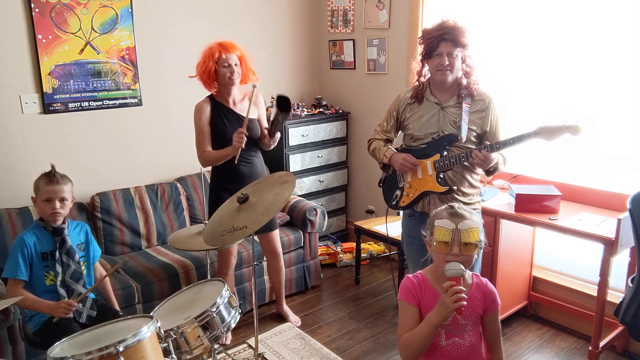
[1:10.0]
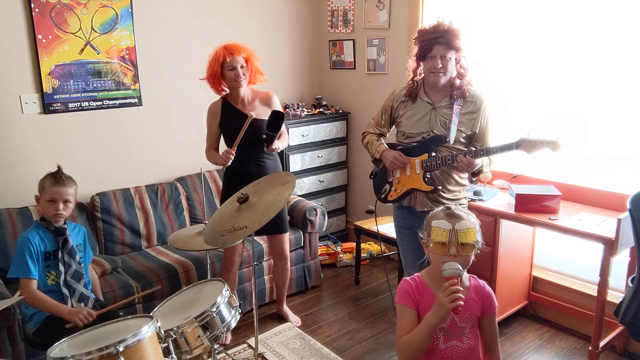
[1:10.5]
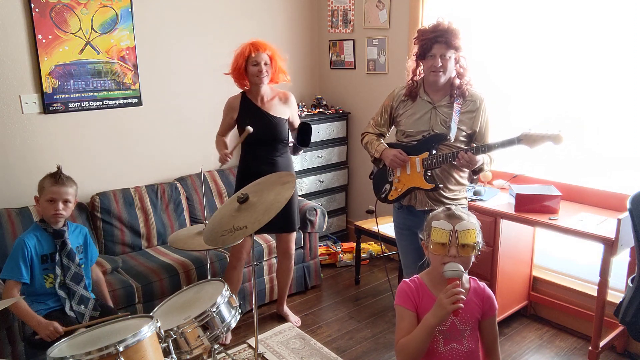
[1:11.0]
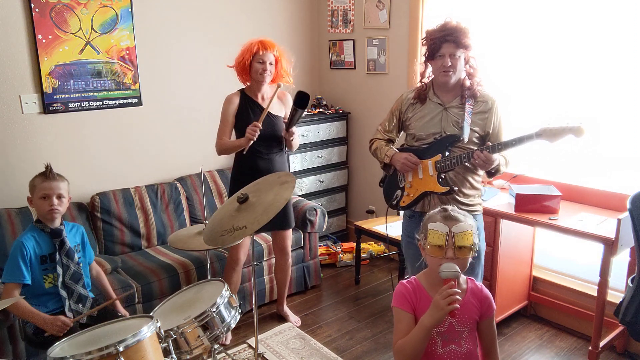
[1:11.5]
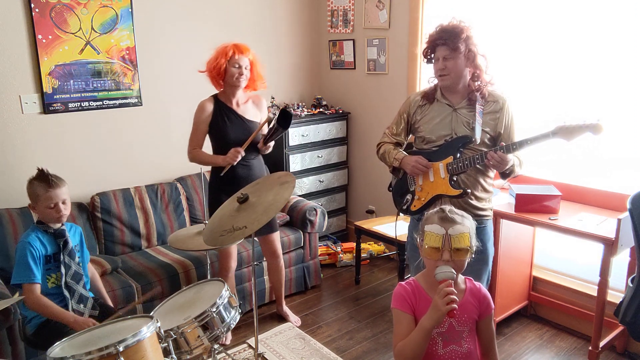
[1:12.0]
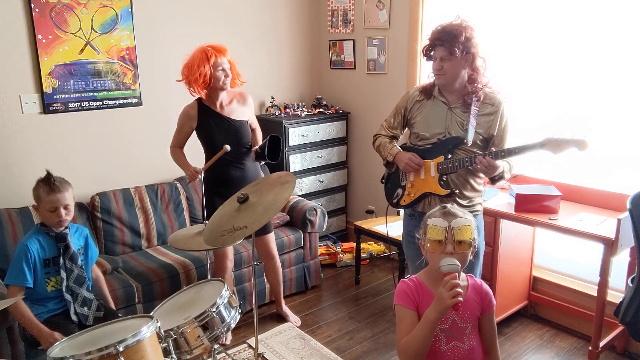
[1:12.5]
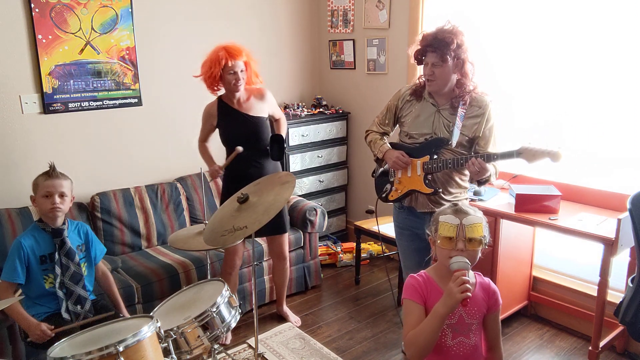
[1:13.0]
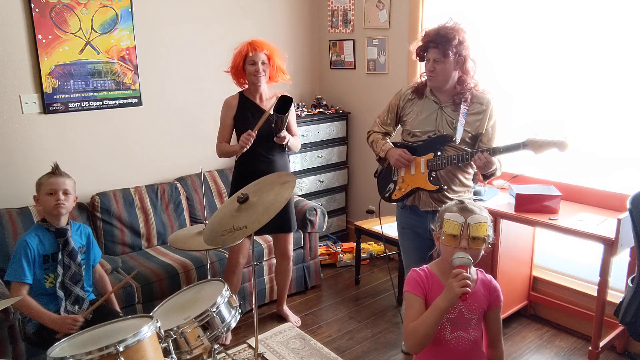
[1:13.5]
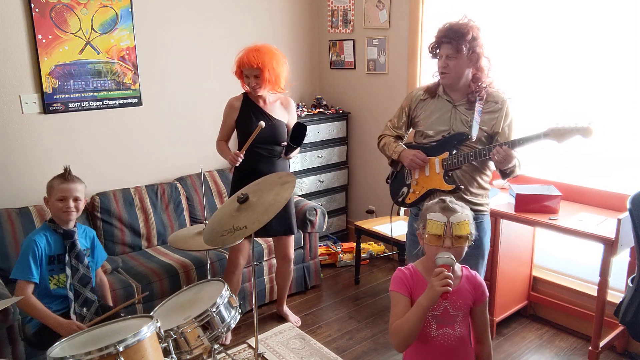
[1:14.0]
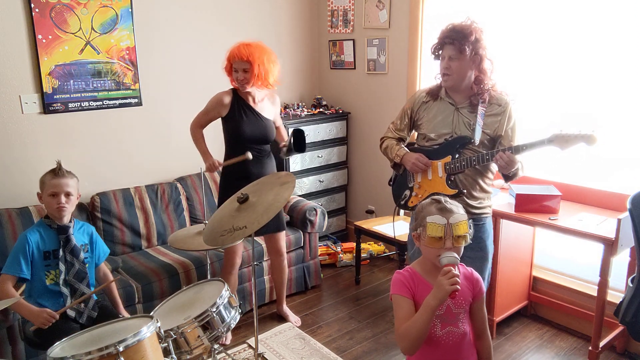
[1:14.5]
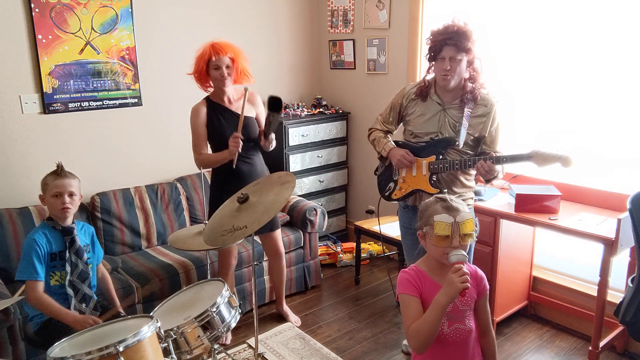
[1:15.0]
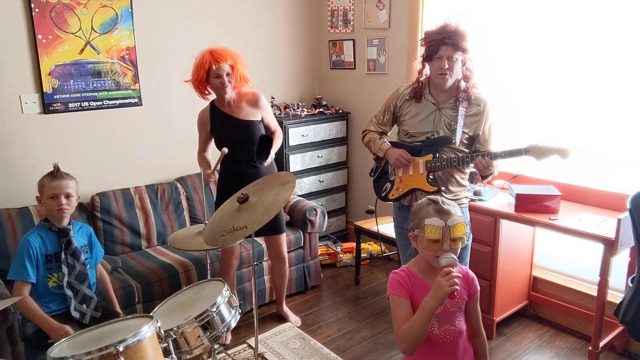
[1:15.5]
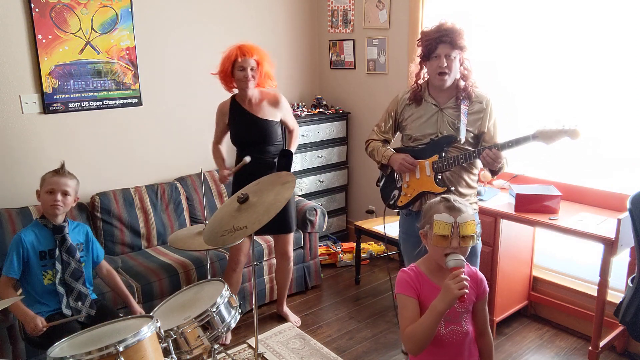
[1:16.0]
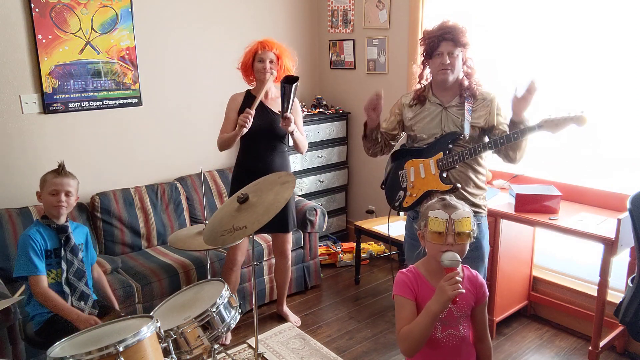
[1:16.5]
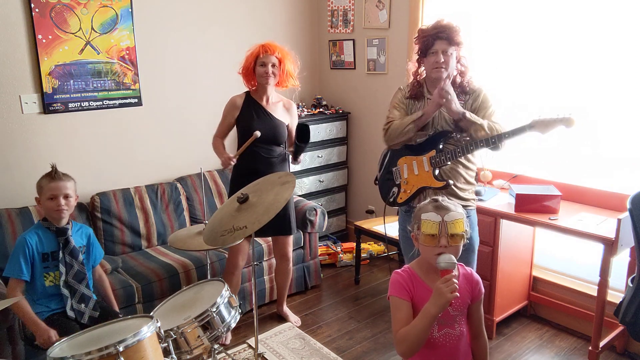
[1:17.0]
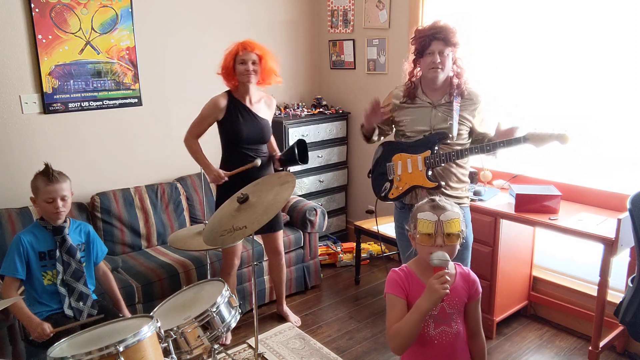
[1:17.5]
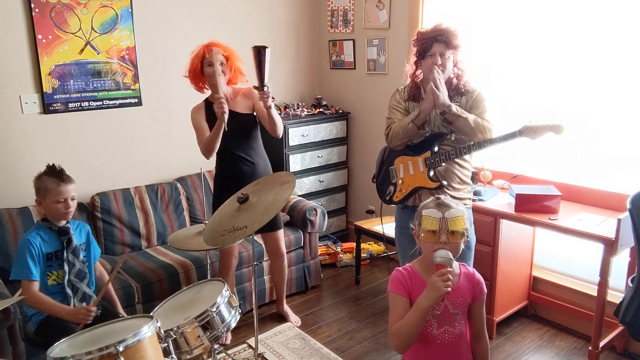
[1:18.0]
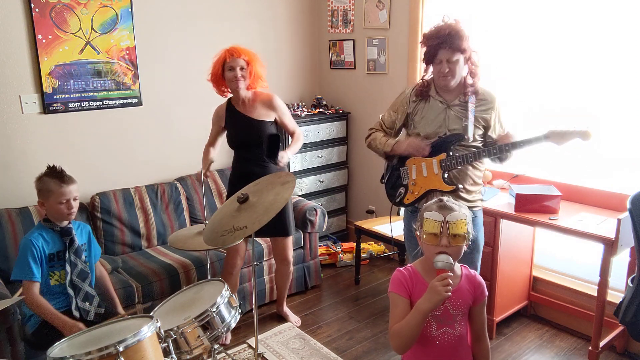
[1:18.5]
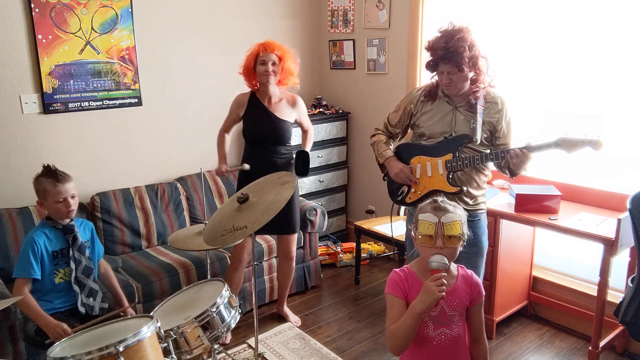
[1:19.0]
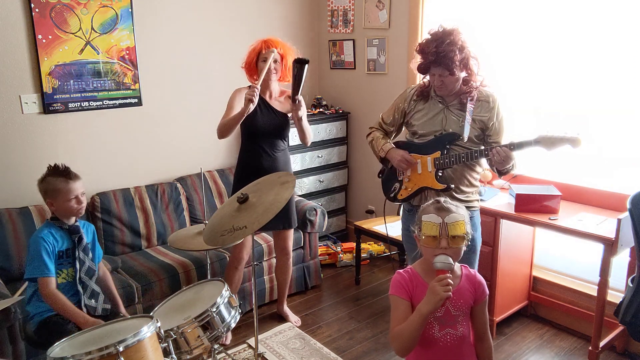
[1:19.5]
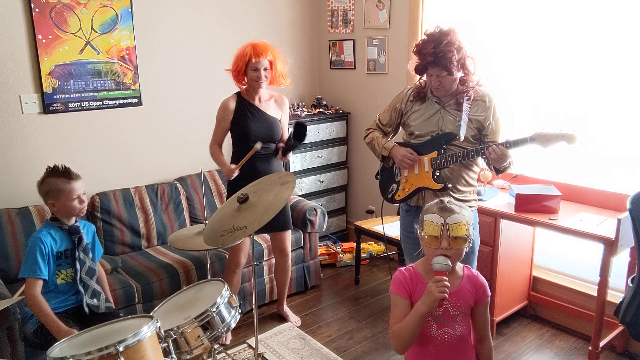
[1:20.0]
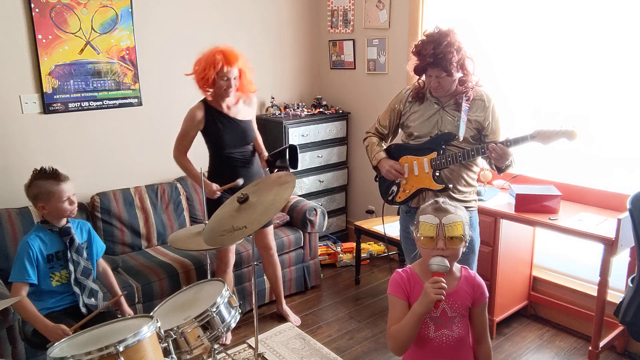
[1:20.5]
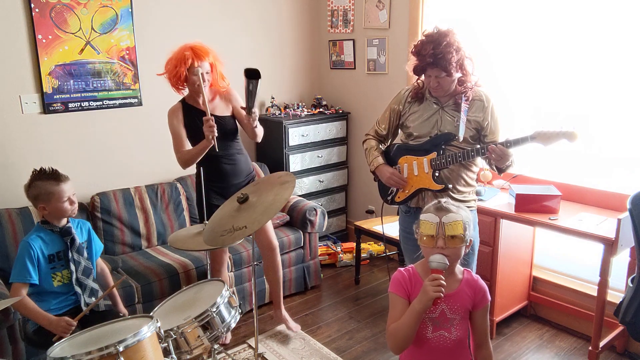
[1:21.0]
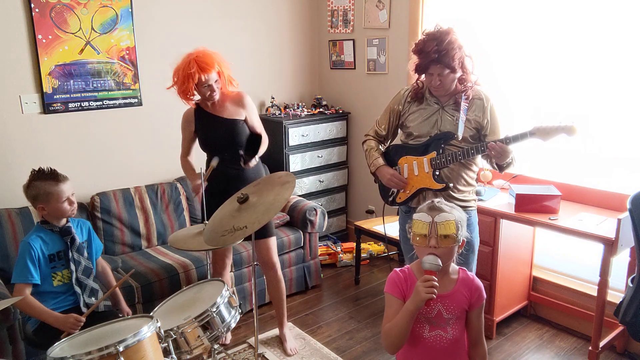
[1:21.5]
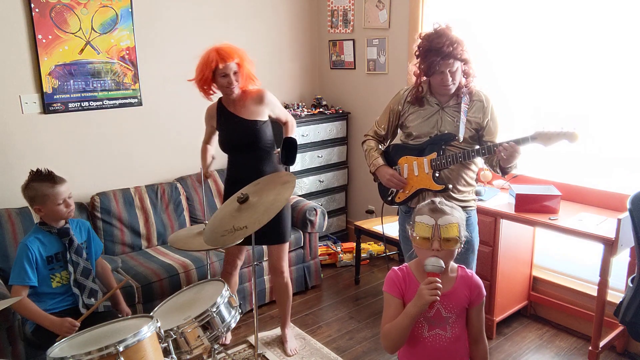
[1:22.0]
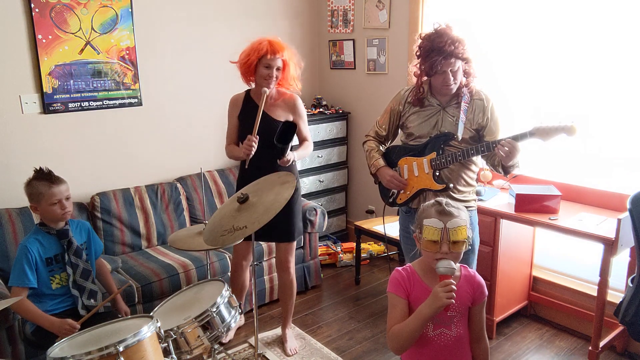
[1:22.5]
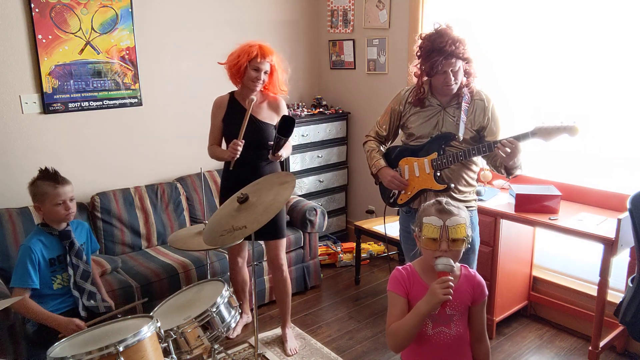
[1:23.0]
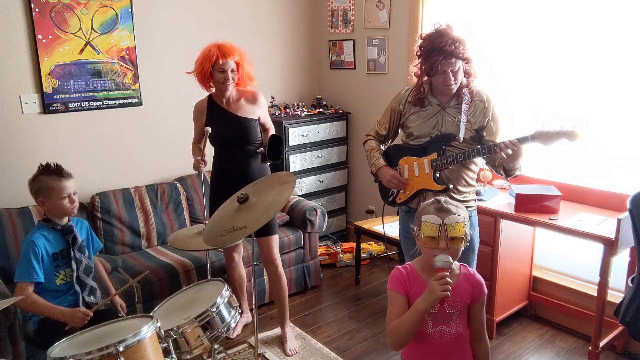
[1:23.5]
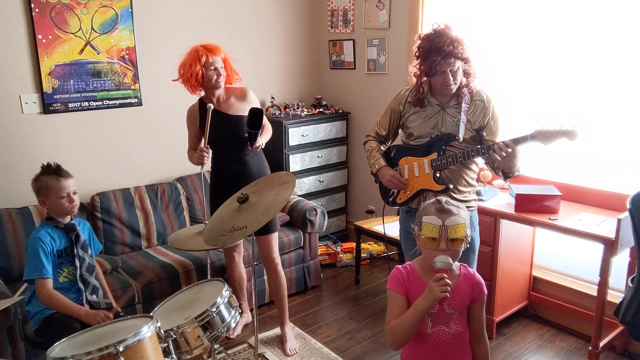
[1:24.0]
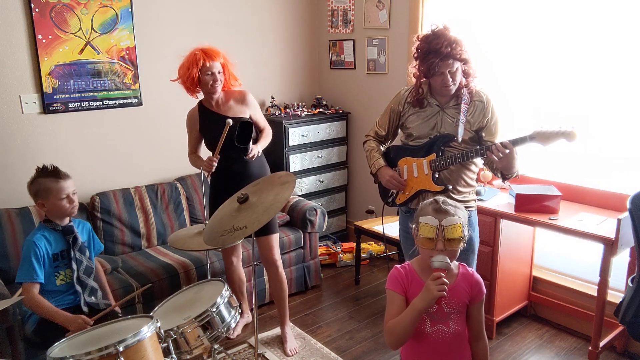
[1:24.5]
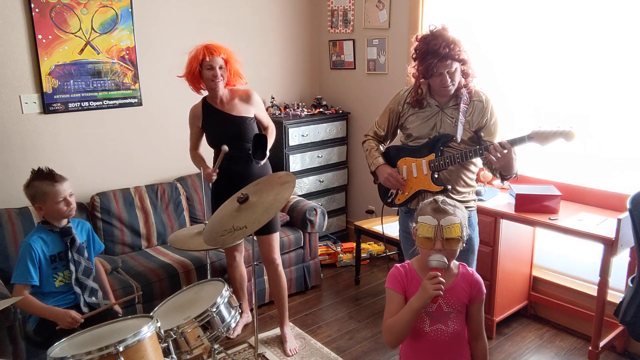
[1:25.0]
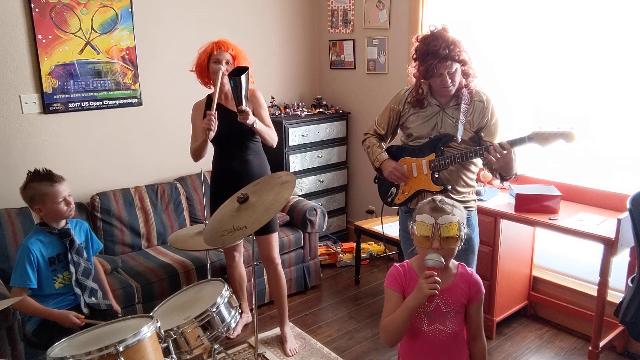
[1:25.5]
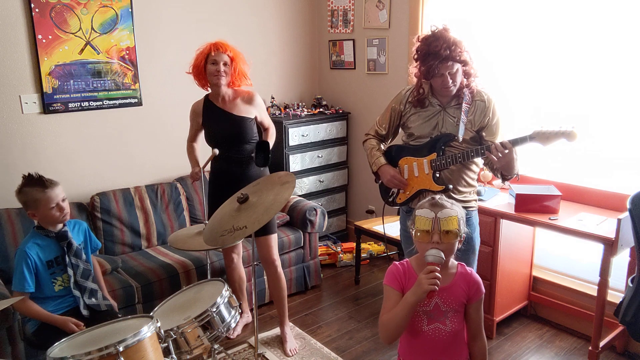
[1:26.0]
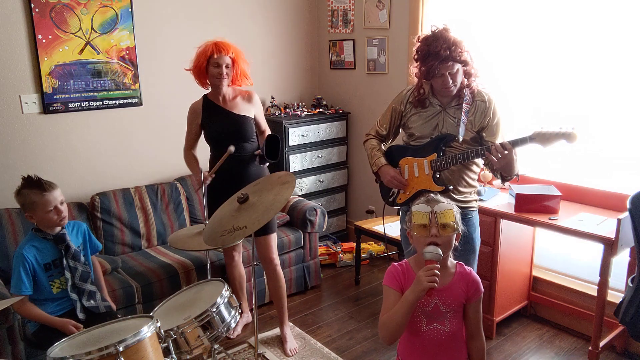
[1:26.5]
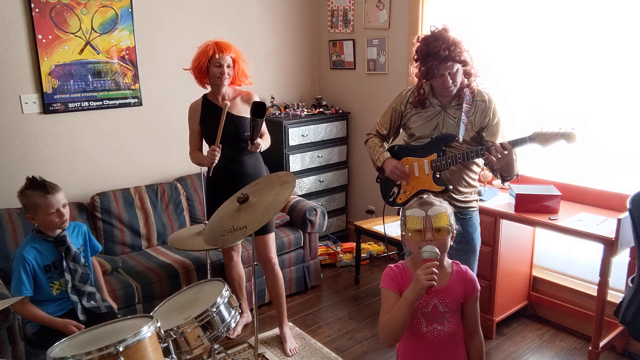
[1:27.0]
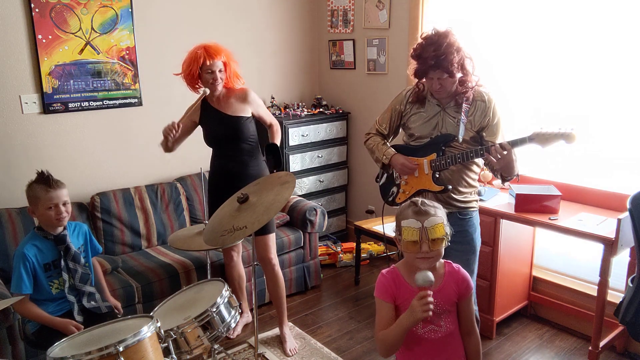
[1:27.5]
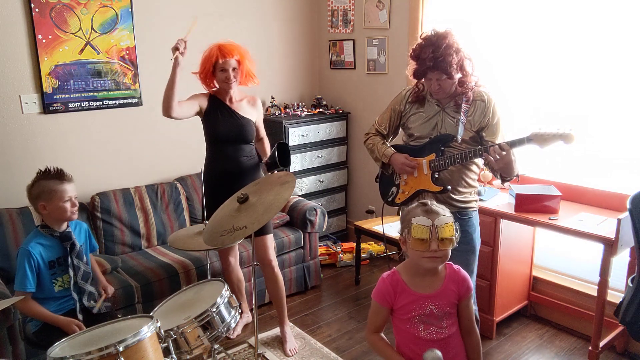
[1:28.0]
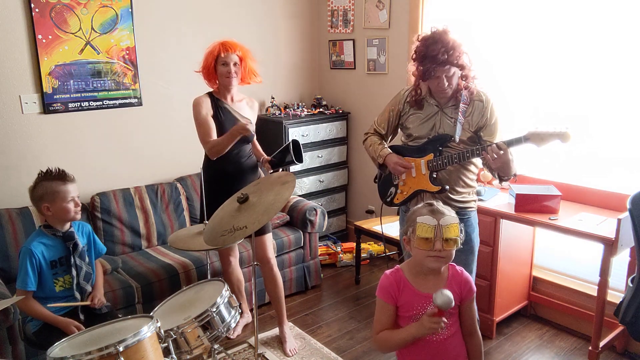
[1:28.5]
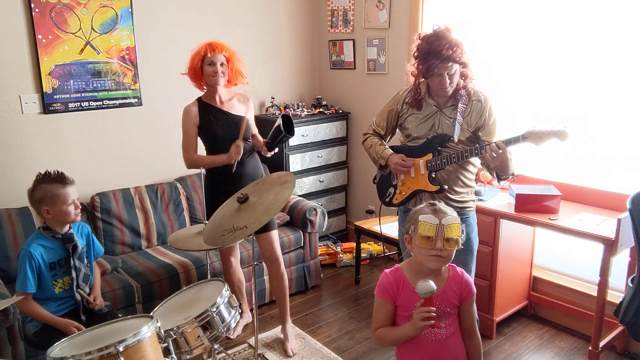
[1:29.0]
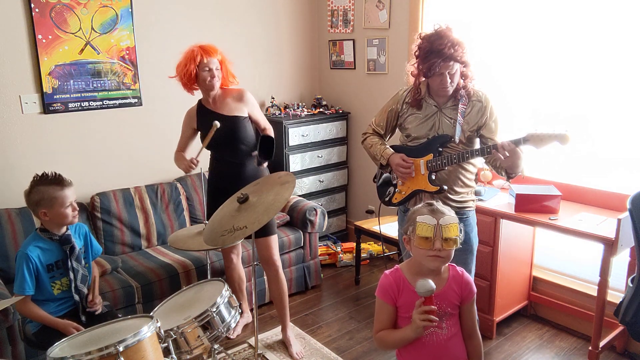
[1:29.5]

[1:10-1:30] The father starts clapping. The little girl looks up, possibly at words on a karaoke screen or at the camera. The father points and moves his hand back and forth, smiling. The brother and the mom are smiling too, and they look like they are jamming out; it is unclear whether the father is really playing the guitar or pretending. The mom apparently is not hitting the cowbell, or hits it only very gently. The brother is actually playing the drums; the drumstick hits the drum and bounces off. The little girl looks serious, maybe nervous, while everyone else is smiling. She wears a pink short-sleeve shirt with a glittery white star on the front.